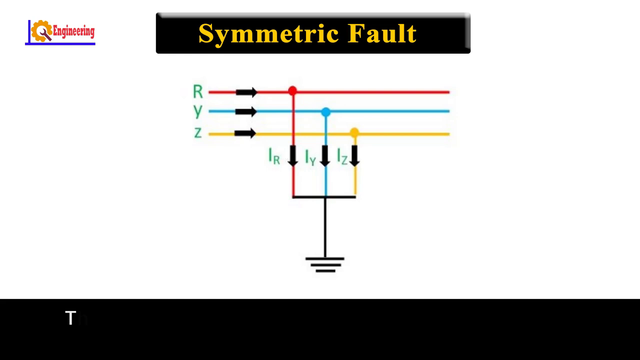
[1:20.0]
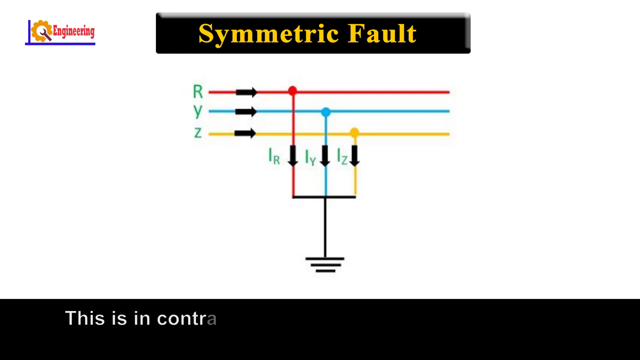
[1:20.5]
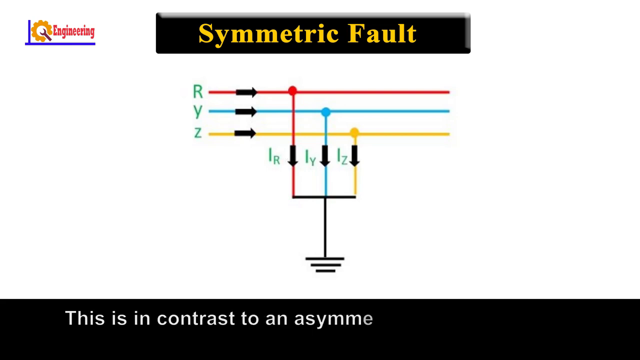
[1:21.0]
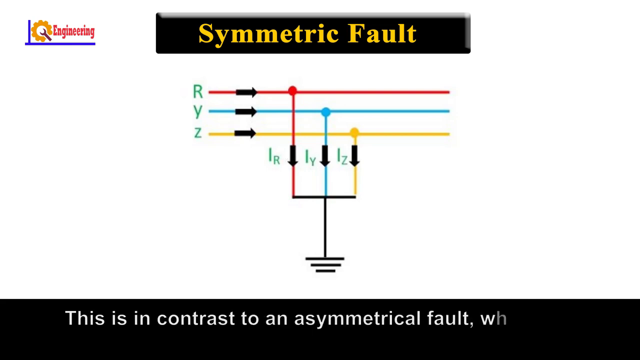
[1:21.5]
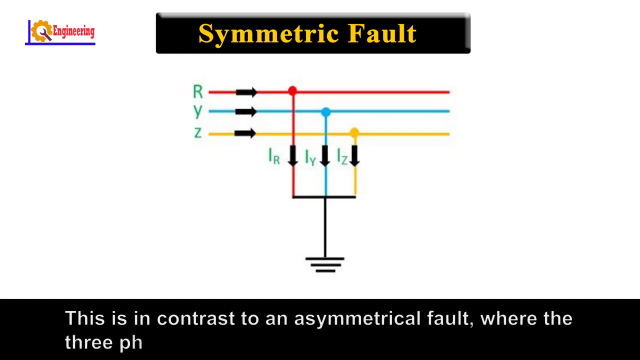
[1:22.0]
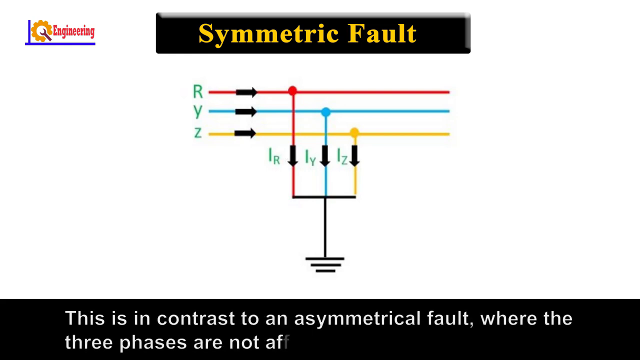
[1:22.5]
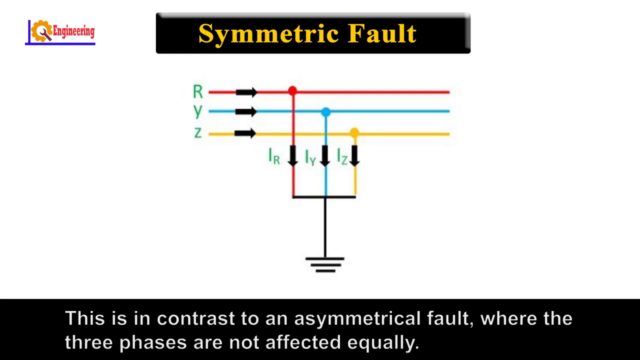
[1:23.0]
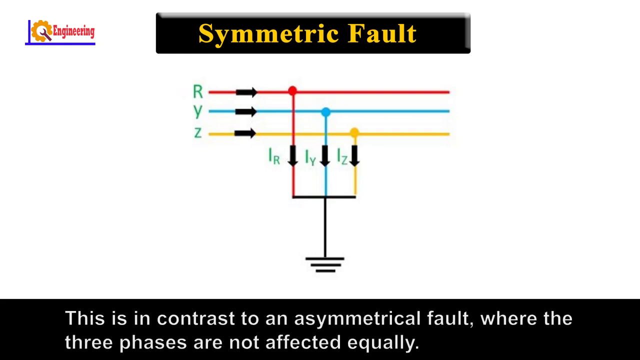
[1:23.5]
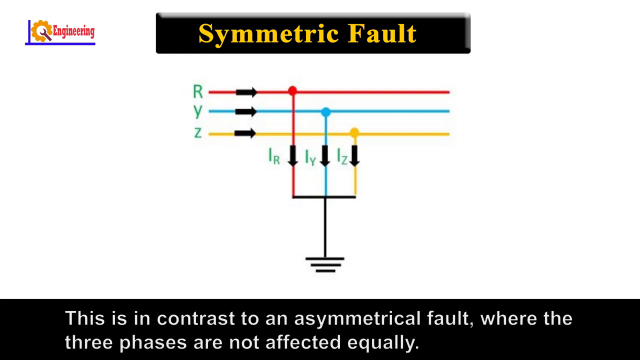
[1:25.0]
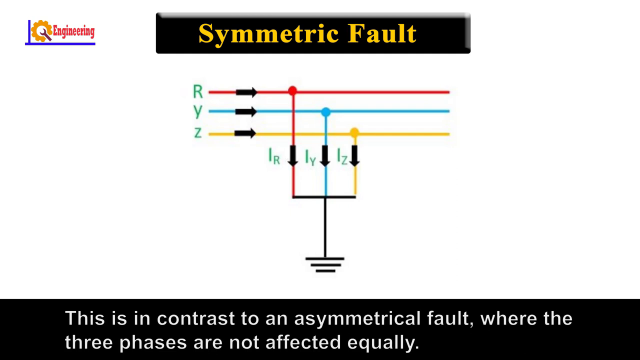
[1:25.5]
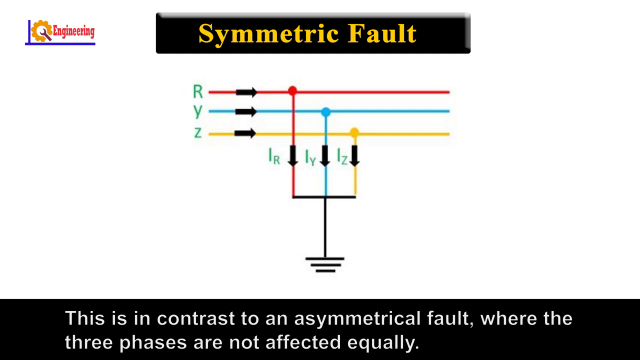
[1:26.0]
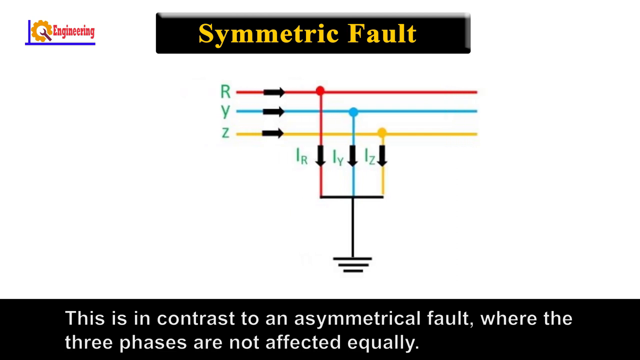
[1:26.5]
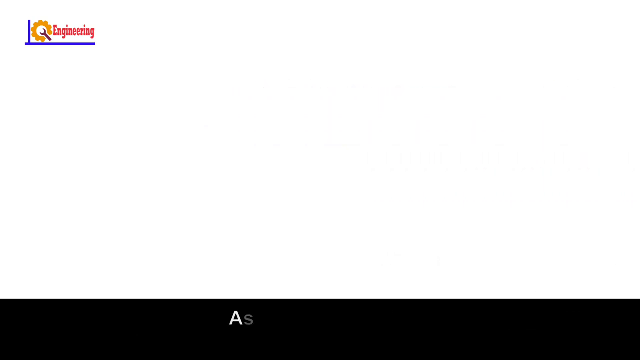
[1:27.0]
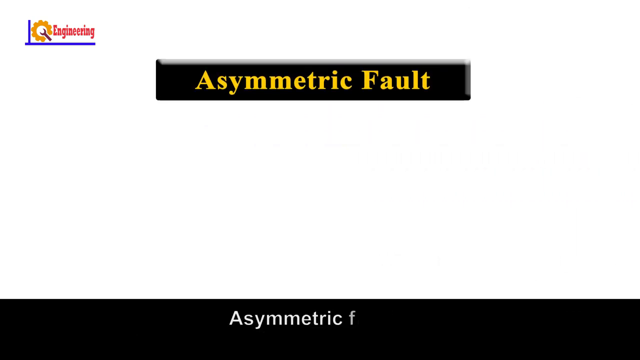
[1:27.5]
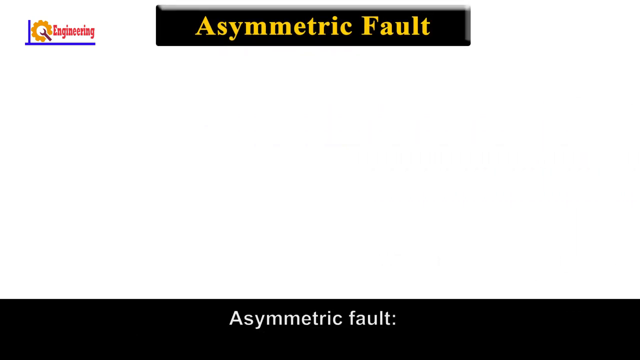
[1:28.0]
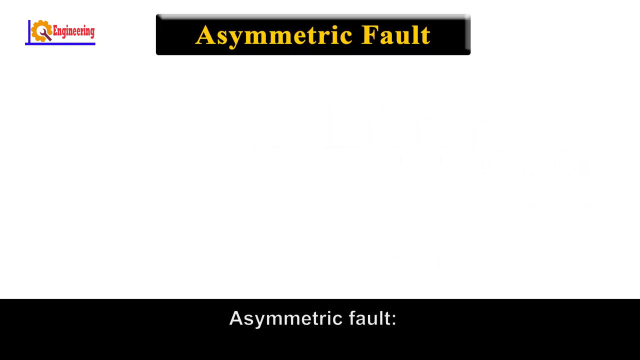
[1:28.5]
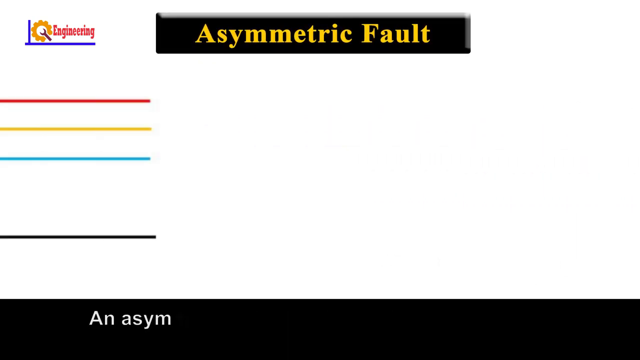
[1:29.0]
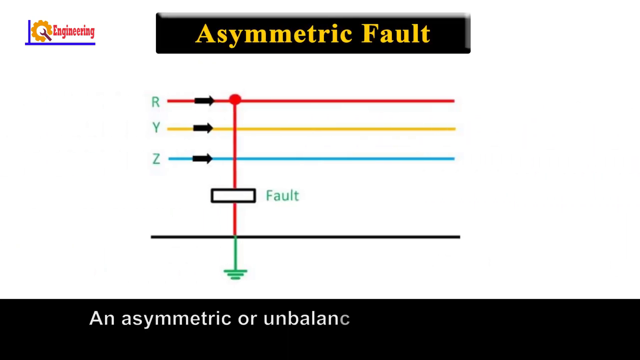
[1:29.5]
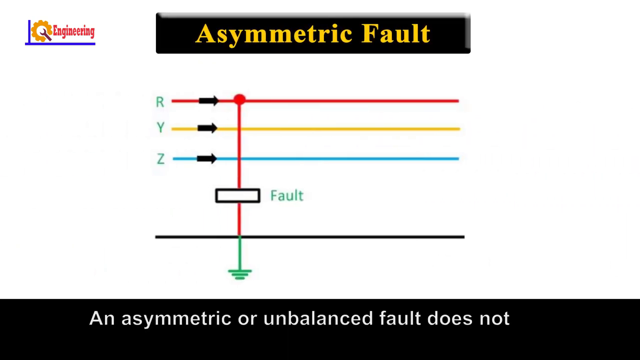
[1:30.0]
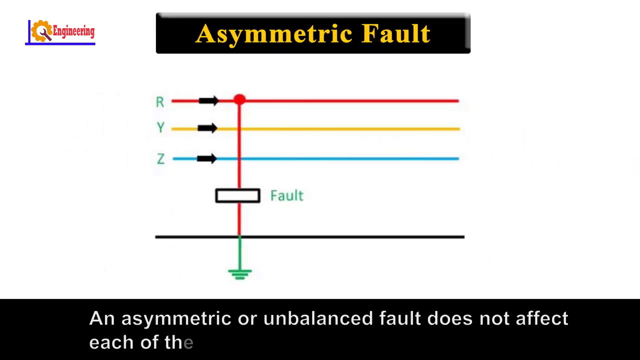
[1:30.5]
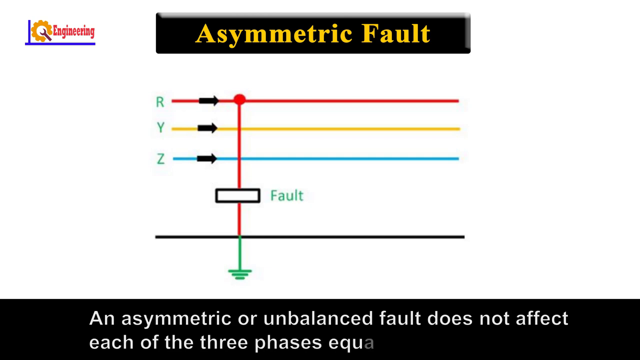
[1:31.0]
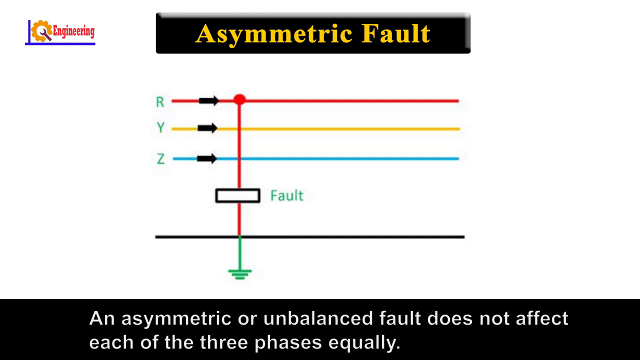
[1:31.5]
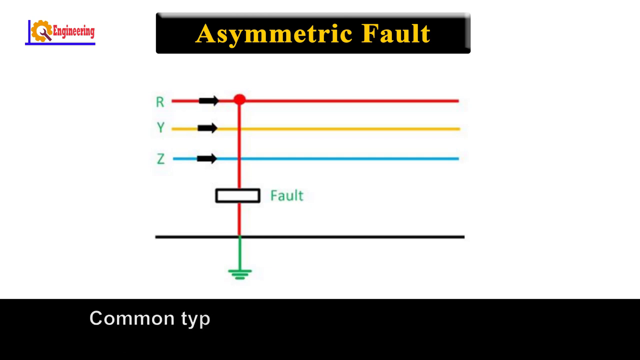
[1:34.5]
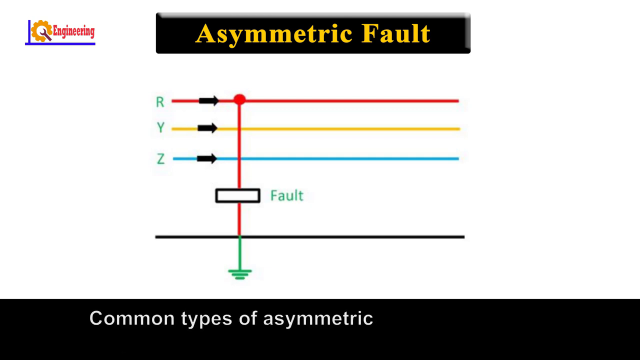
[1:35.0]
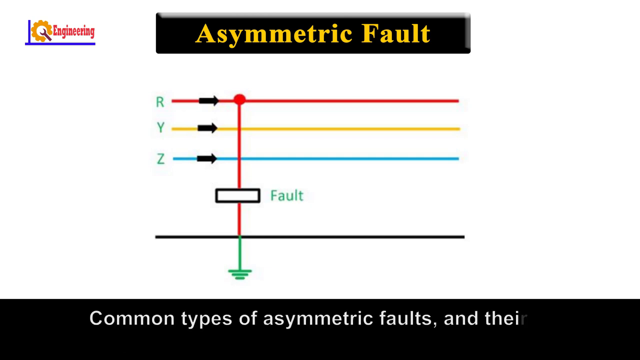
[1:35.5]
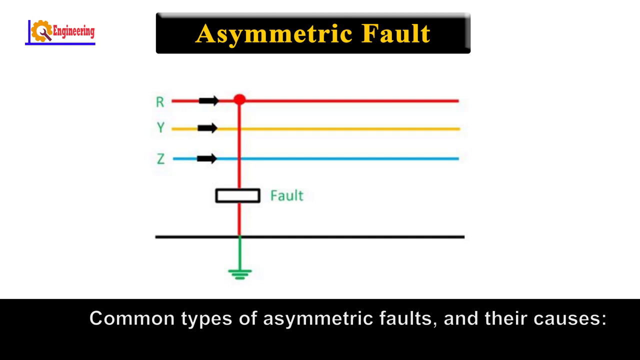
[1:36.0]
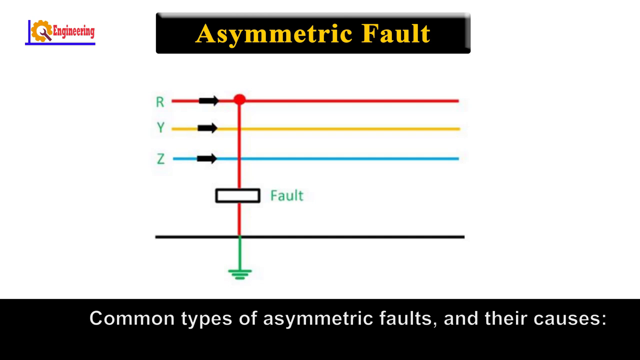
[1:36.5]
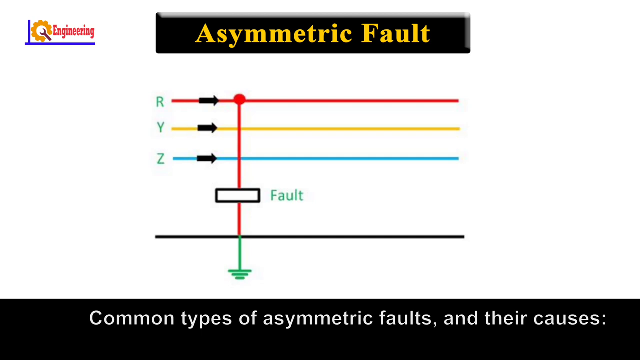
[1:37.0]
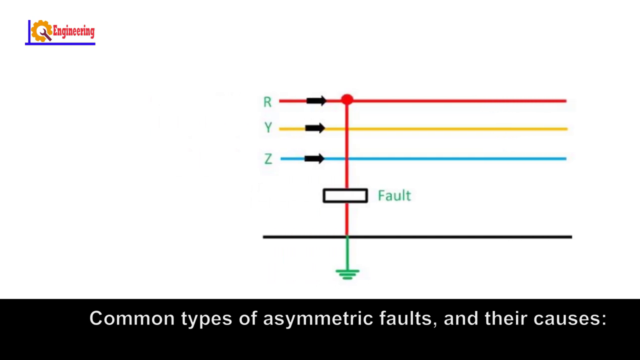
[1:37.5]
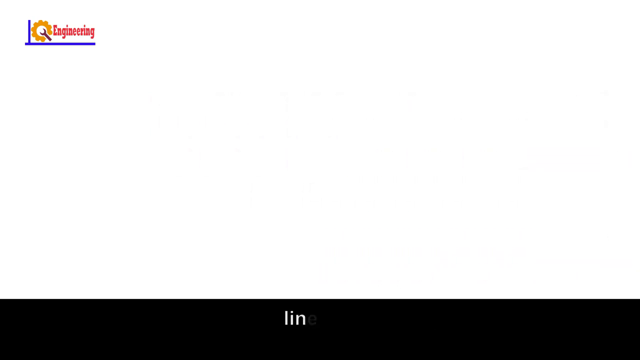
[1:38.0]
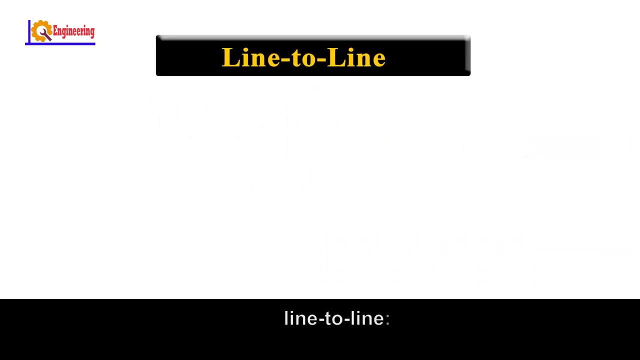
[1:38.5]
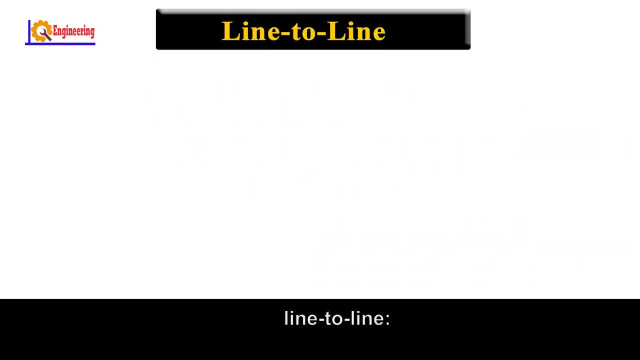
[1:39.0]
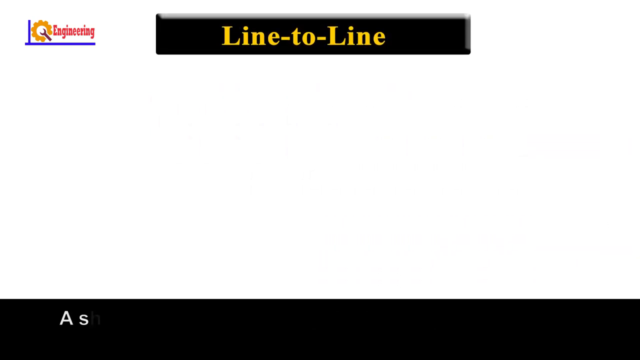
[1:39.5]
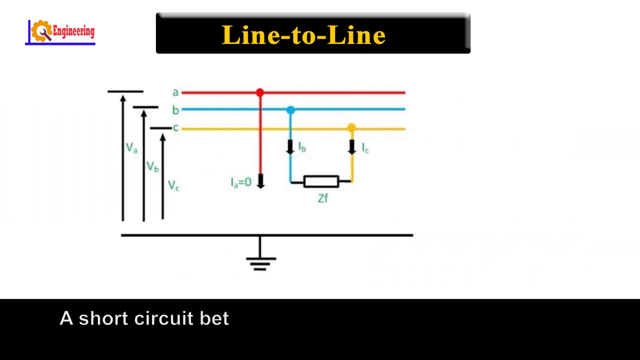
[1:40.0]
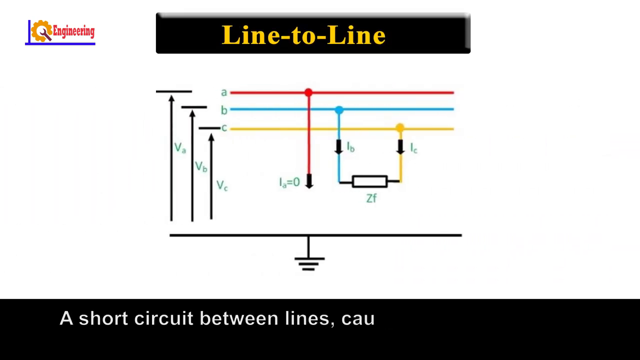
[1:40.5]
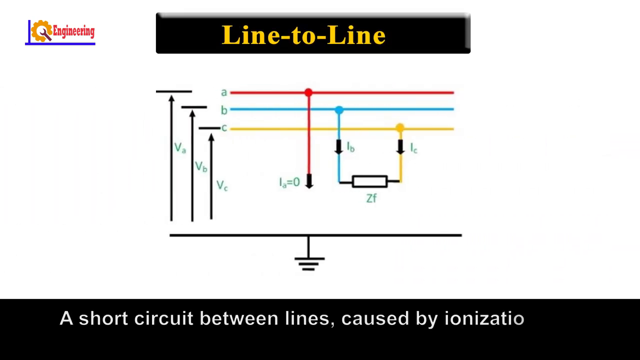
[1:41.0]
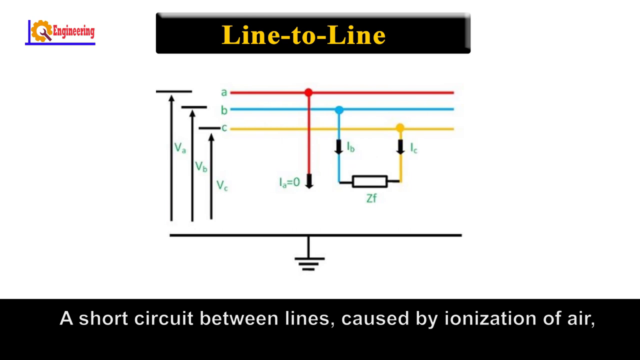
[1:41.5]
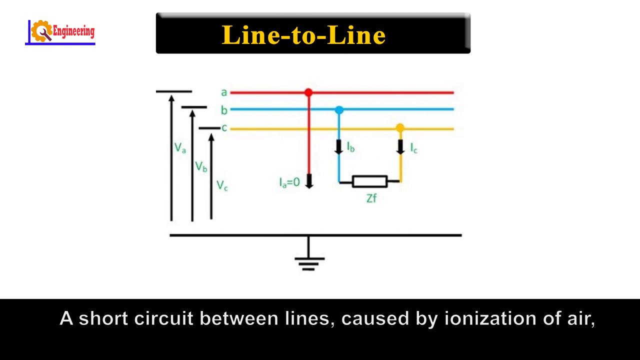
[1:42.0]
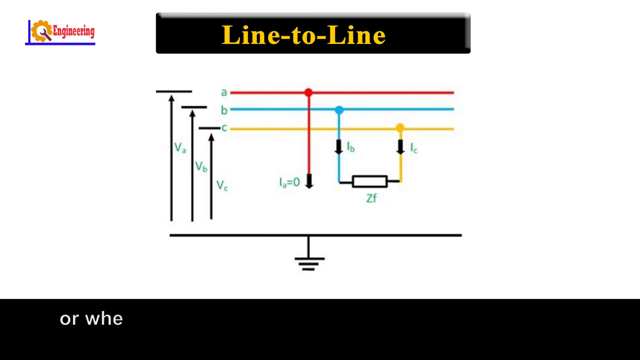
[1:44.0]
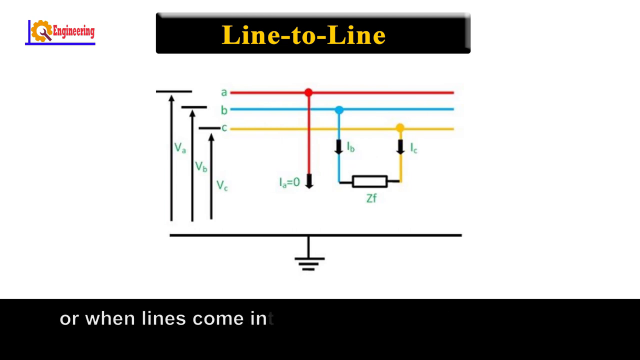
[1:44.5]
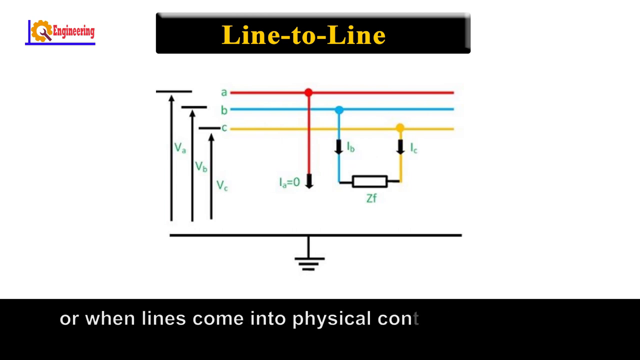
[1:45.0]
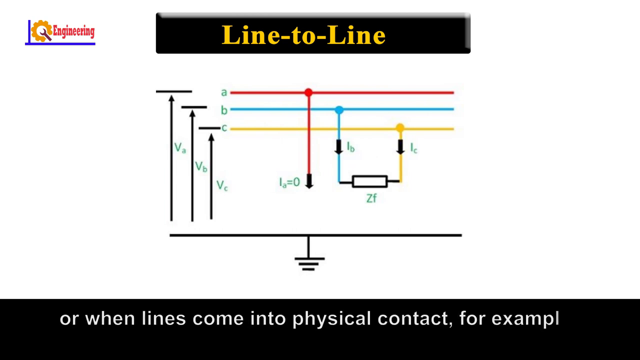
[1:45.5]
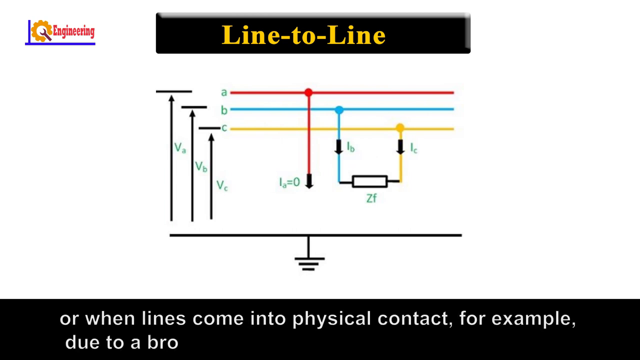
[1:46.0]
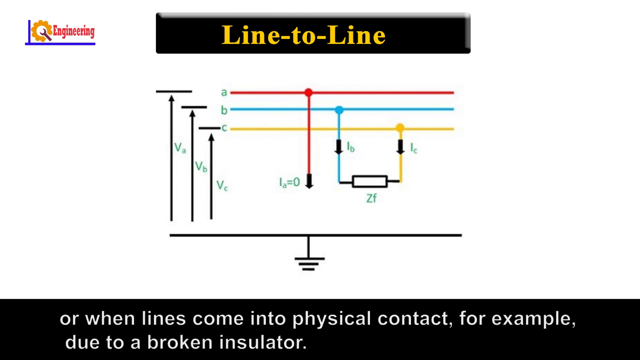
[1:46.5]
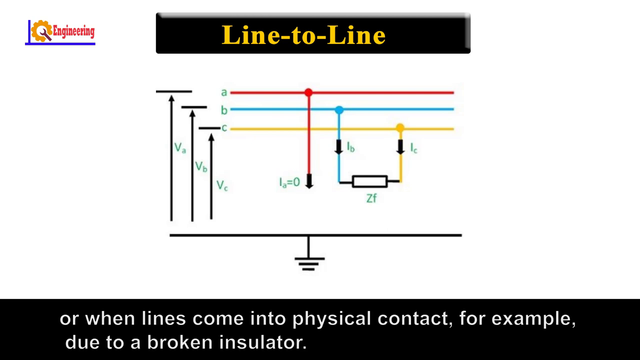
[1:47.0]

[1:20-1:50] The symmetric fault continues to be shown, with few indicators. A graph about the asymmetric fault follows, along with an example of asymmetric faults and their causes. Line-to-line is displayed in an informative graph. The graphs share the same colors. Text appears, looking like a caption, giving an asymmetric fault description and three faulty phases, and an explanation of line-to-line as a short circuit between lines caused by an ionization error, or when lines come into physical contact due to a broken insulator.